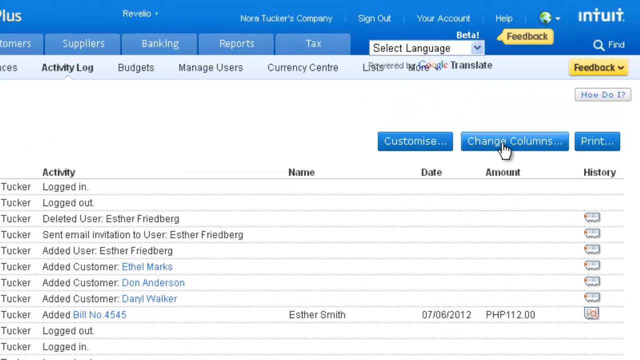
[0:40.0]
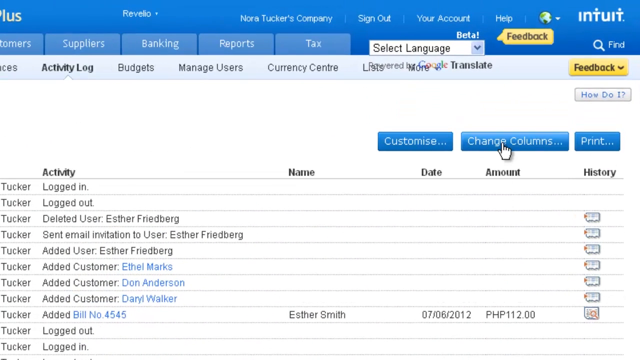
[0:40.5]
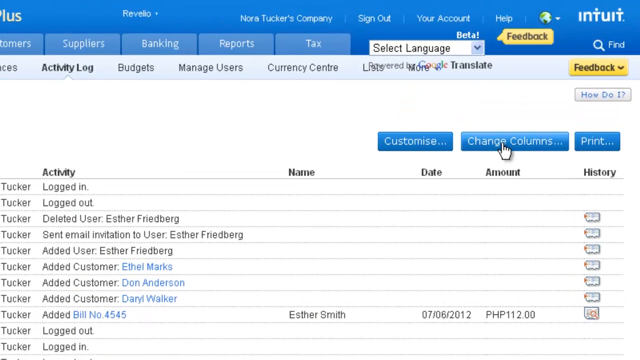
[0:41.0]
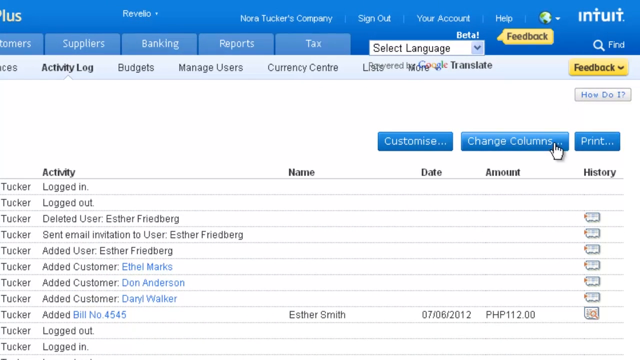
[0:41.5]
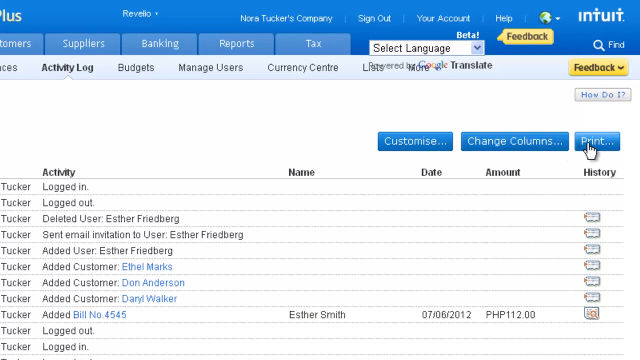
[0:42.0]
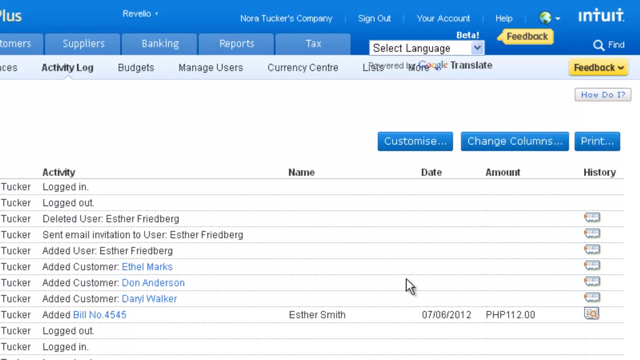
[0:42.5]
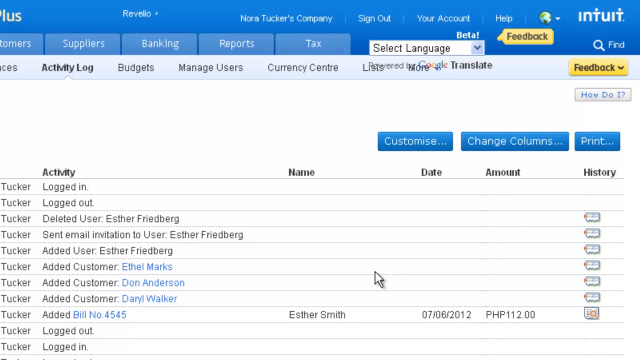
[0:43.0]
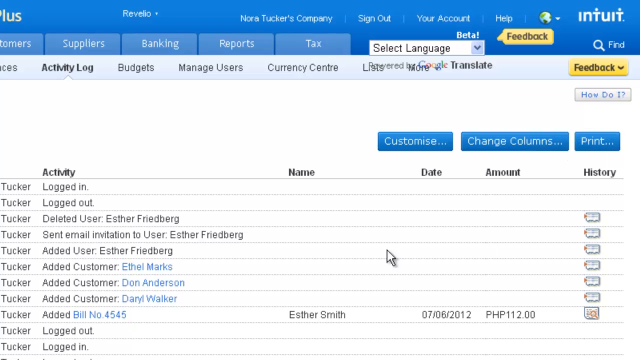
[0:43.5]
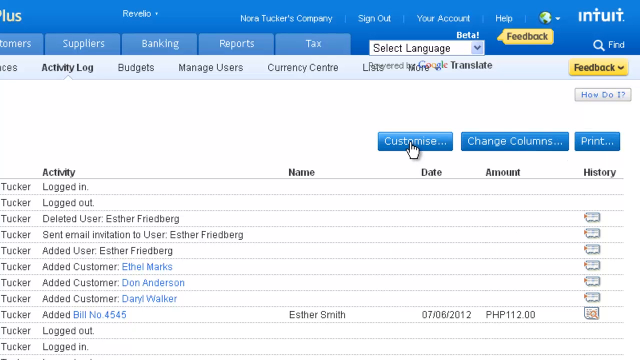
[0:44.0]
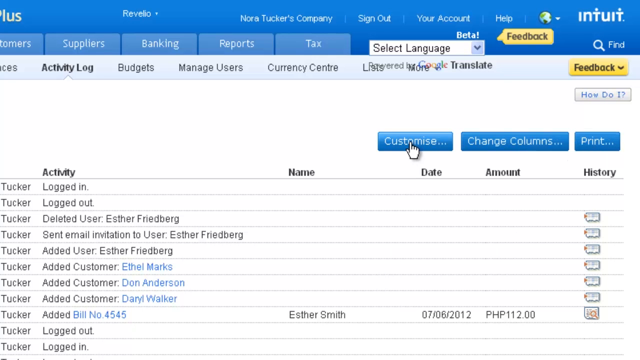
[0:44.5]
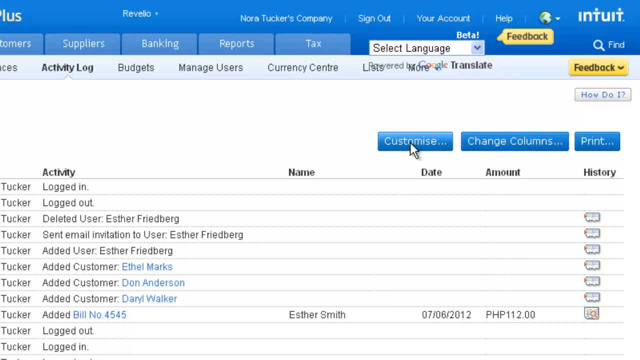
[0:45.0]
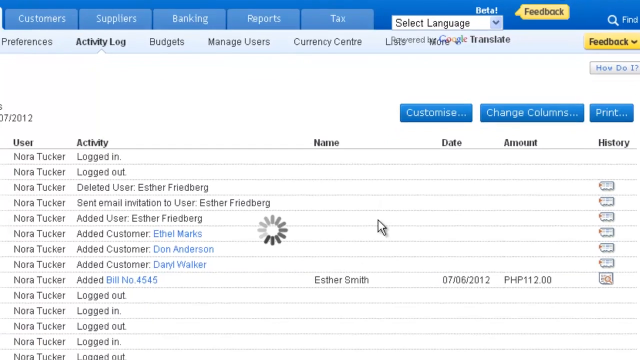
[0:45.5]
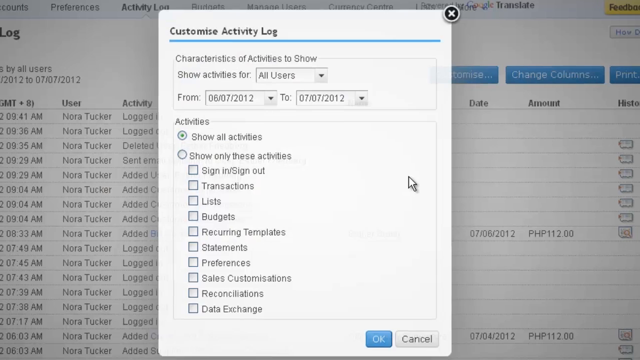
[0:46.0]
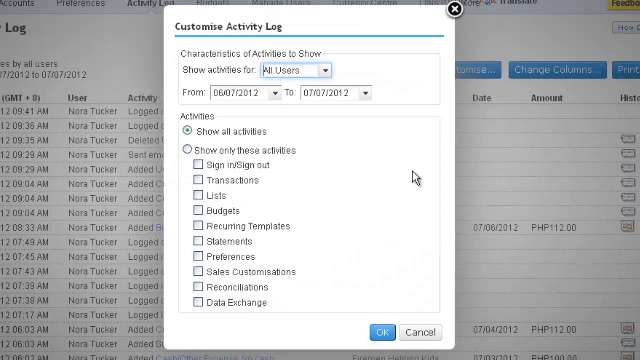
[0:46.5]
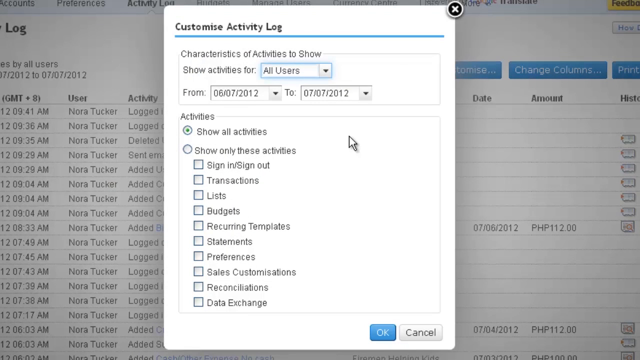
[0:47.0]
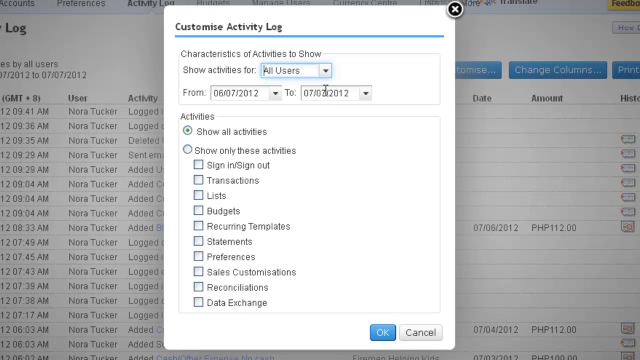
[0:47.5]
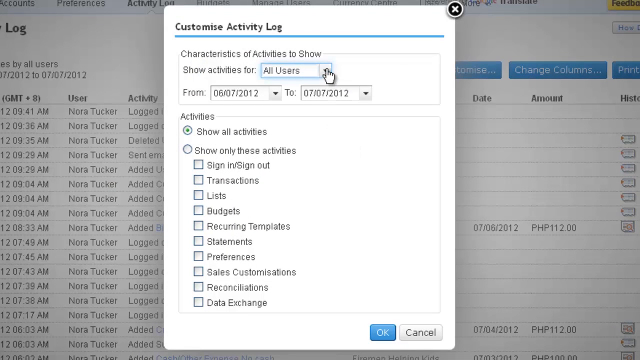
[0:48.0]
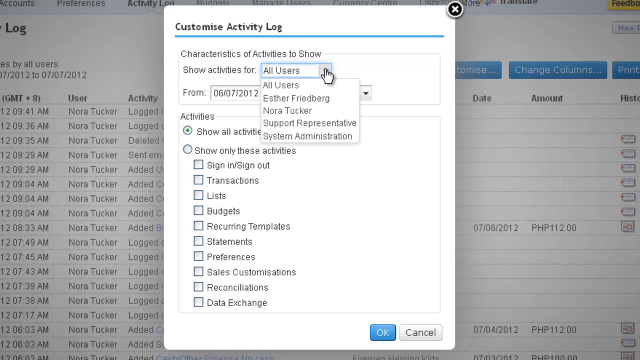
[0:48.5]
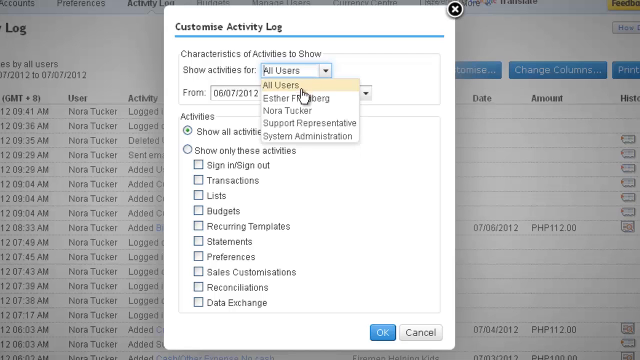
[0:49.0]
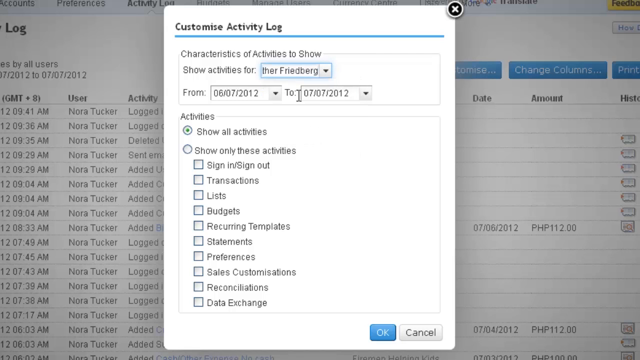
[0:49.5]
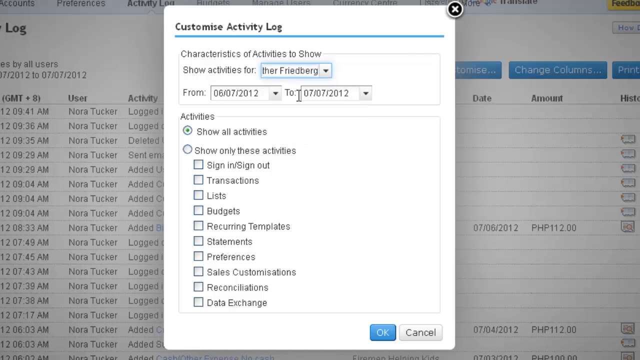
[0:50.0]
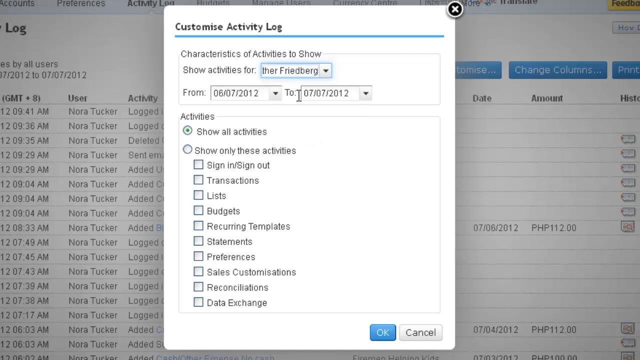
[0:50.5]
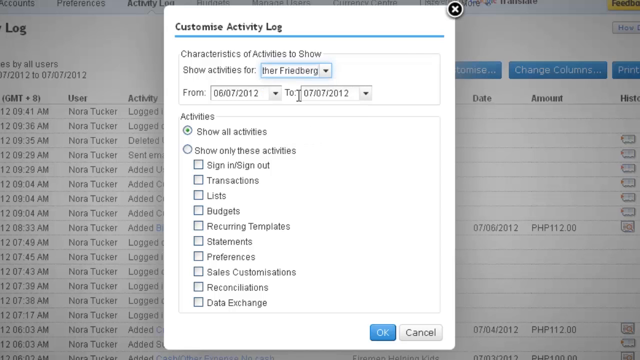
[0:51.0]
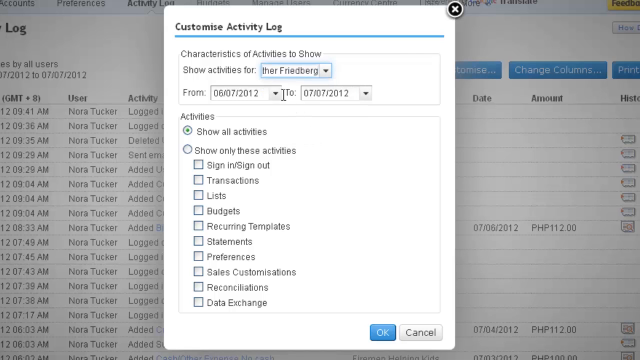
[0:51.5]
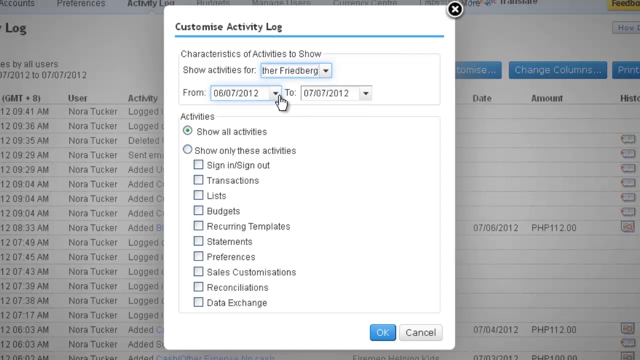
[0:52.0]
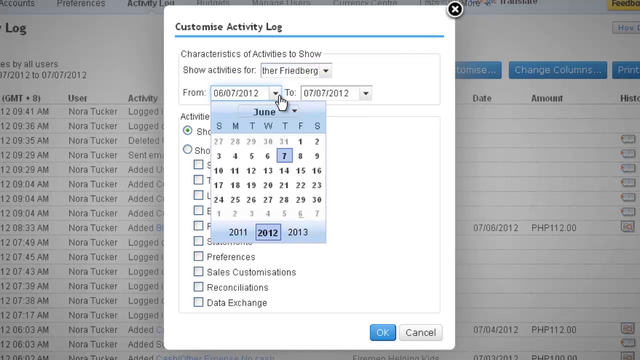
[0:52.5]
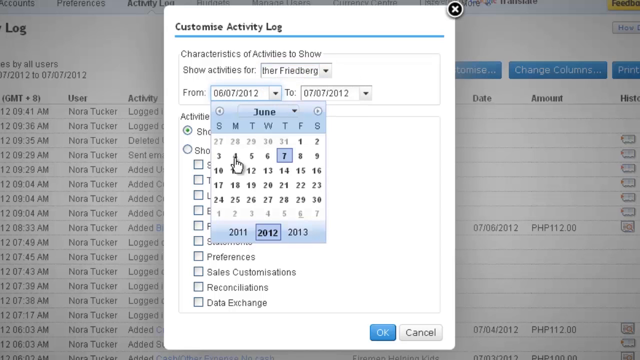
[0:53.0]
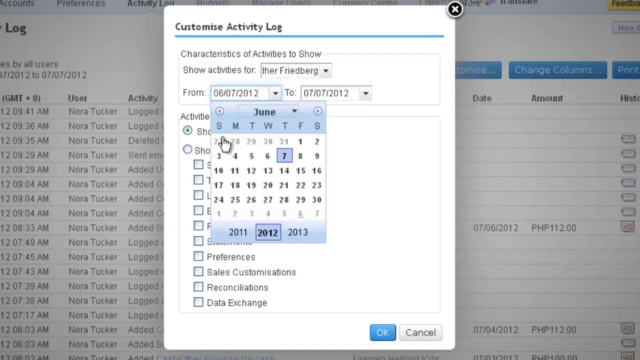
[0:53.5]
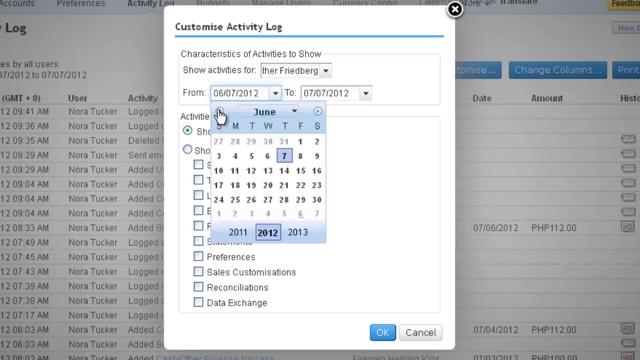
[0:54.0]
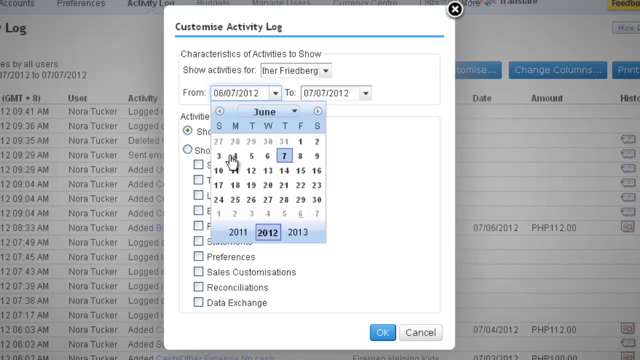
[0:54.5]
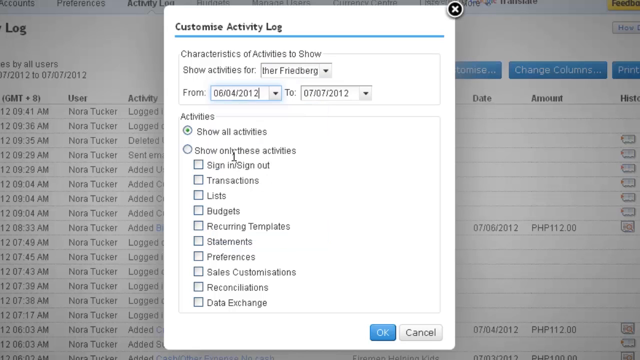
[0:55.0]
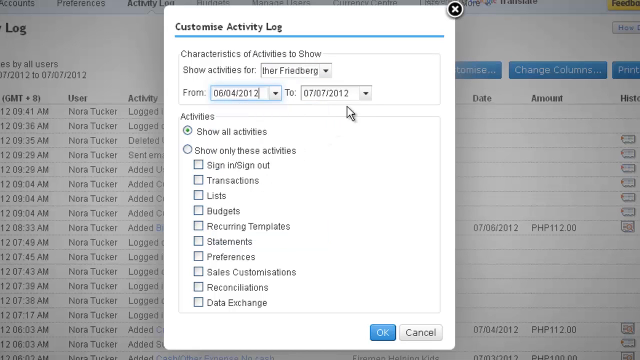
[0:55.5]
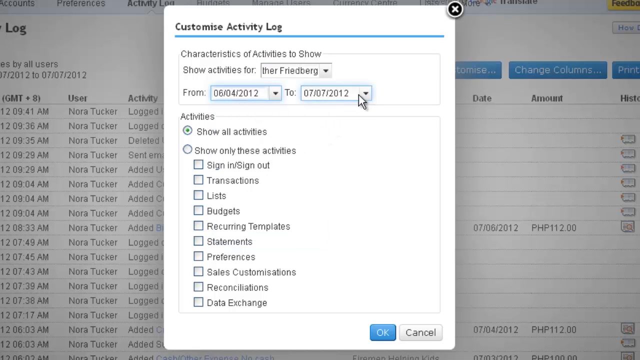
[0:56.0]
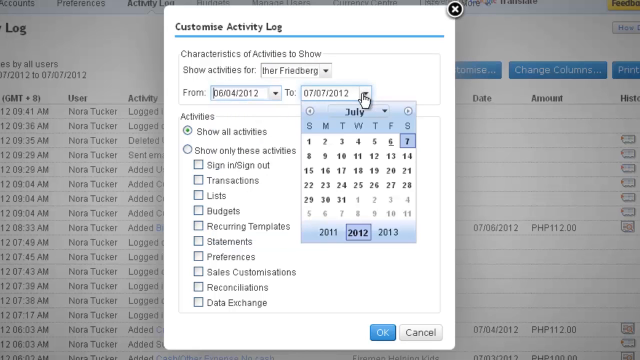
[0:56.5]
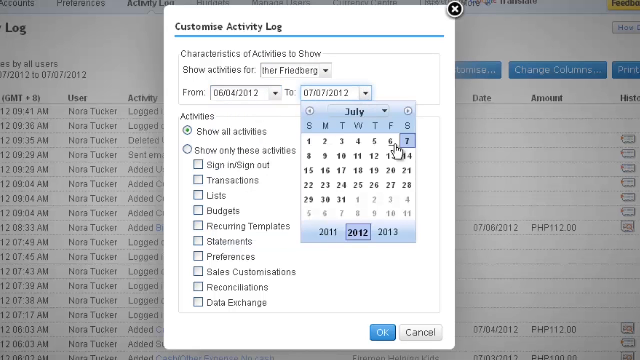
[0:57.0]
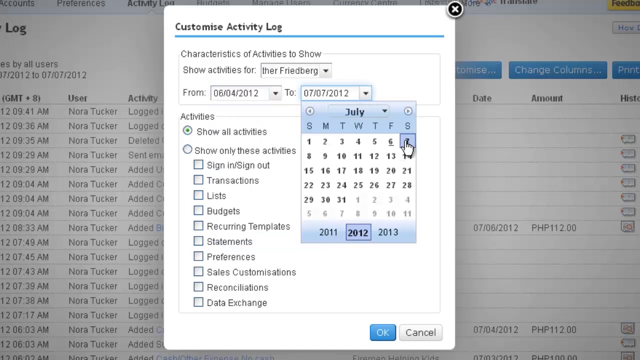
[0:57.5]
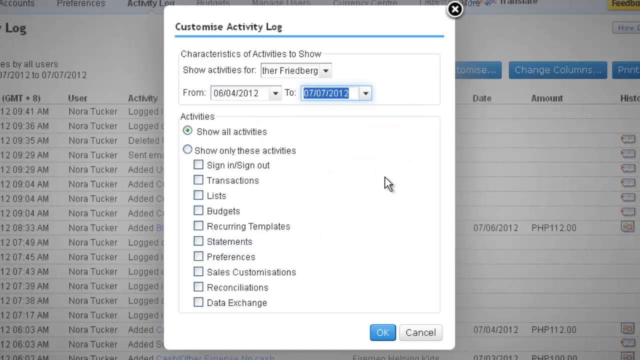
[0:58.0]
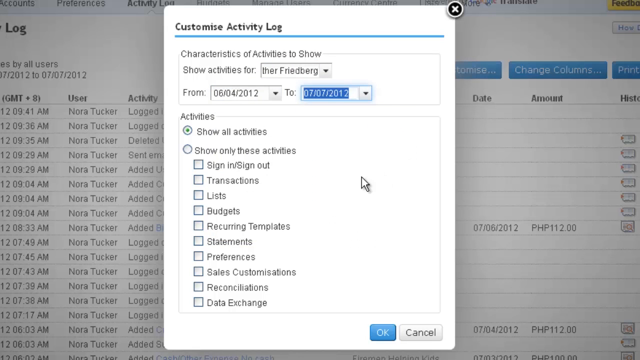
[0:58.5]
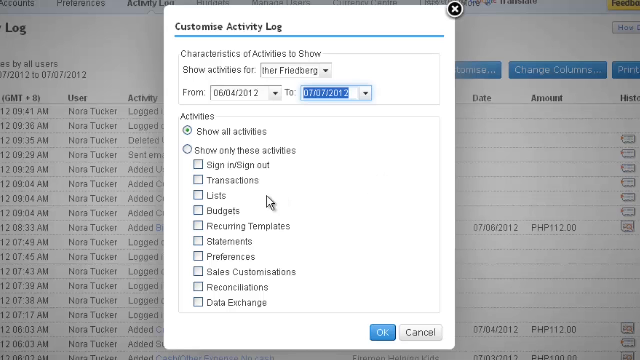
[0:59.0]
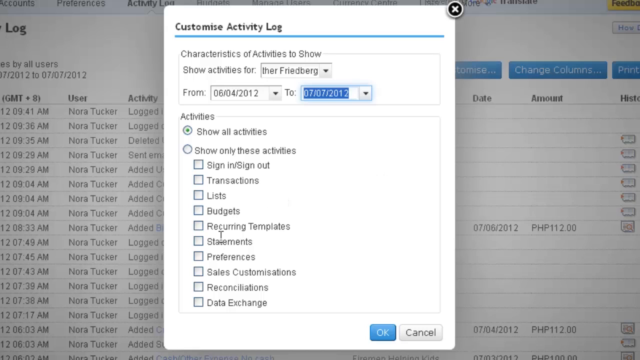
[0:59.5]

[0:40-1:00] Instead of clicking the button, the view goes to "customize", showing "customize activity log". A dropdown to show activity for, apparently, a person is opened, and the name Esther Freedberg appears. A time frame is then selected. The application has a blue header with some yellow, text in white or black, and hyperlinks in a lighter blue, giving it a very corporate, sterile, business-application look.